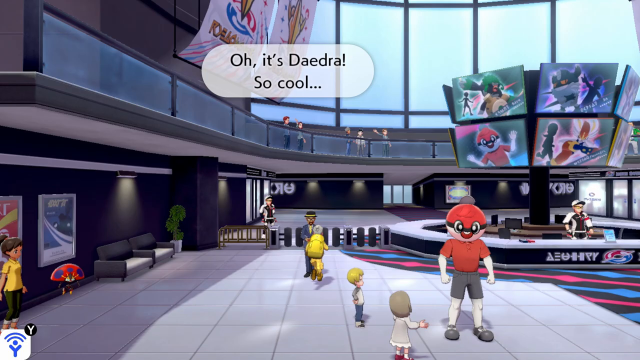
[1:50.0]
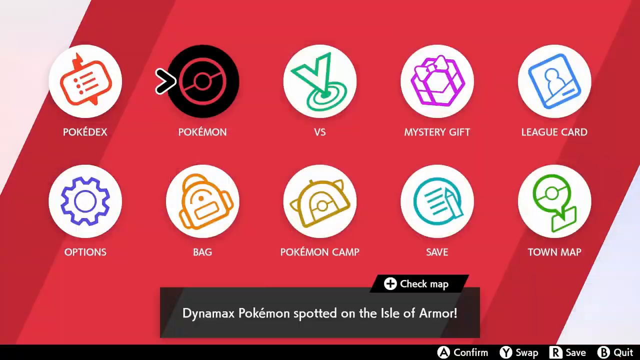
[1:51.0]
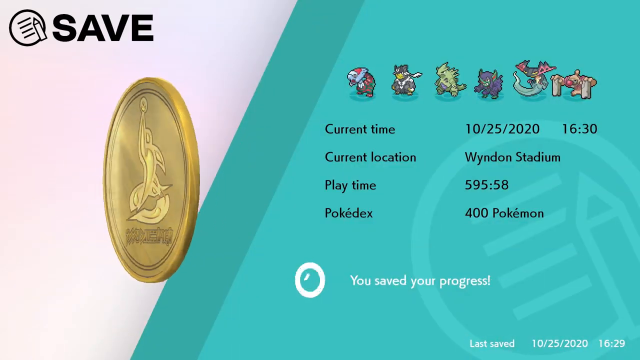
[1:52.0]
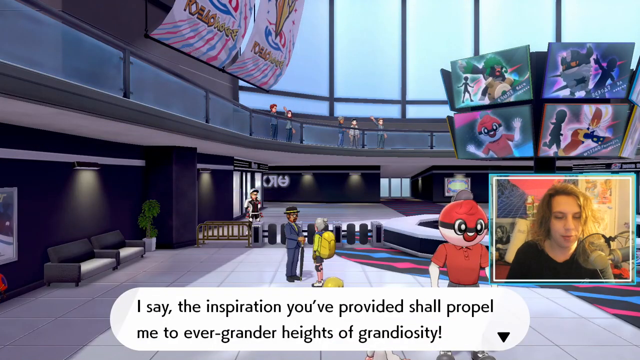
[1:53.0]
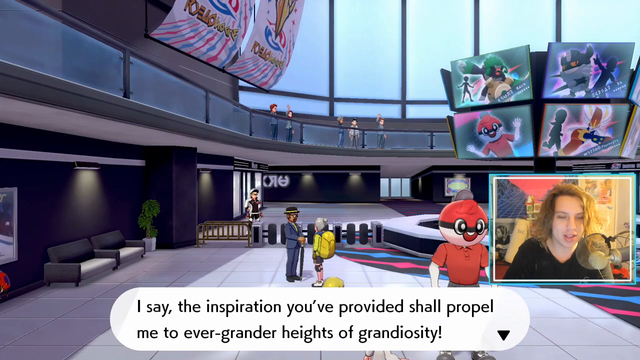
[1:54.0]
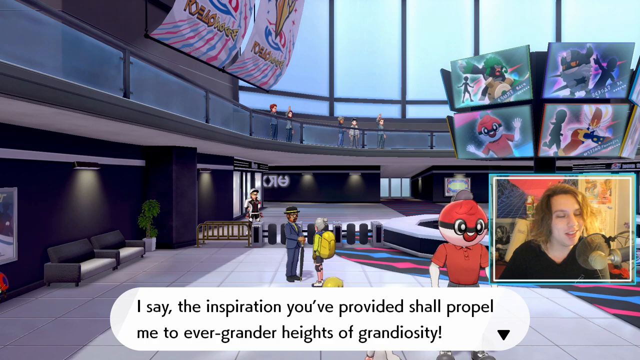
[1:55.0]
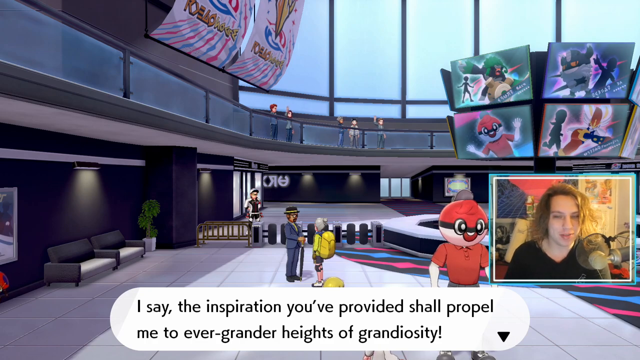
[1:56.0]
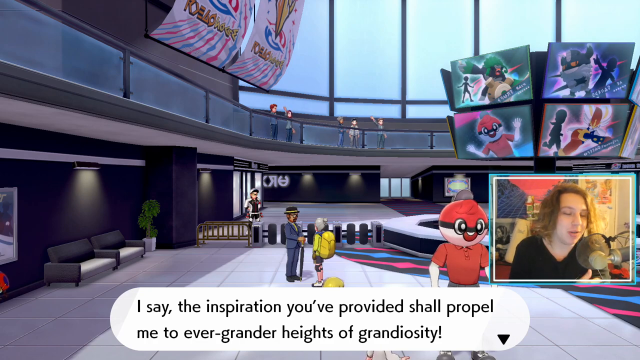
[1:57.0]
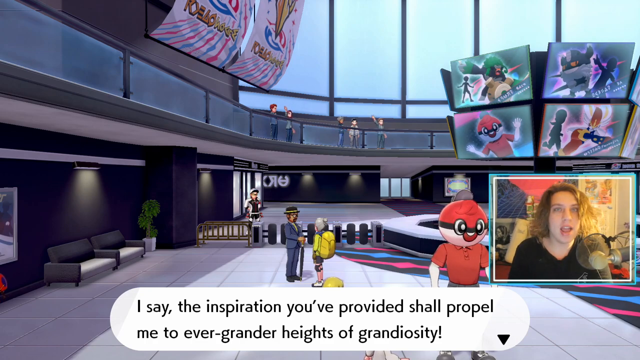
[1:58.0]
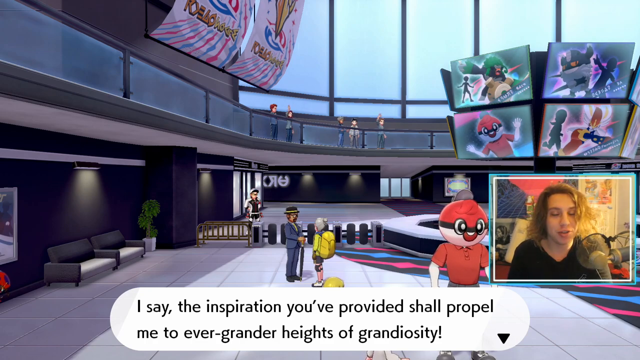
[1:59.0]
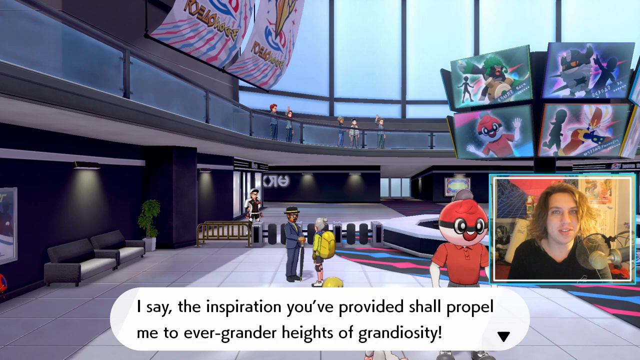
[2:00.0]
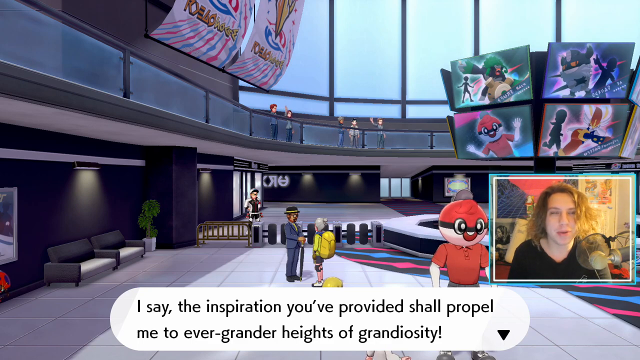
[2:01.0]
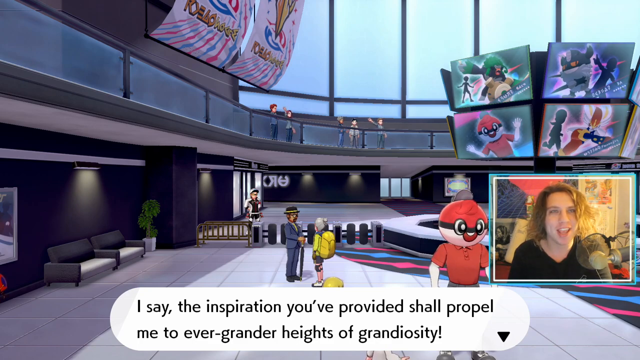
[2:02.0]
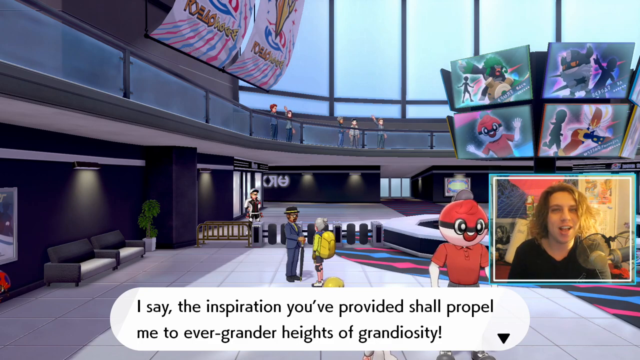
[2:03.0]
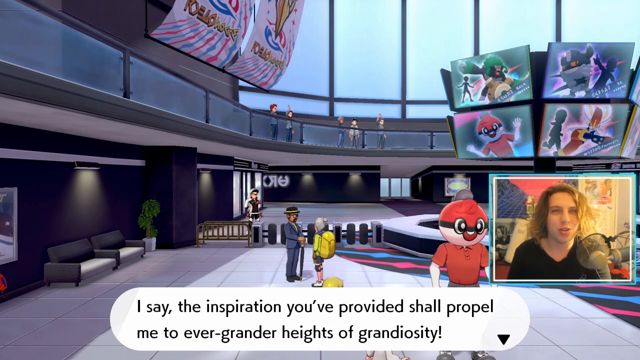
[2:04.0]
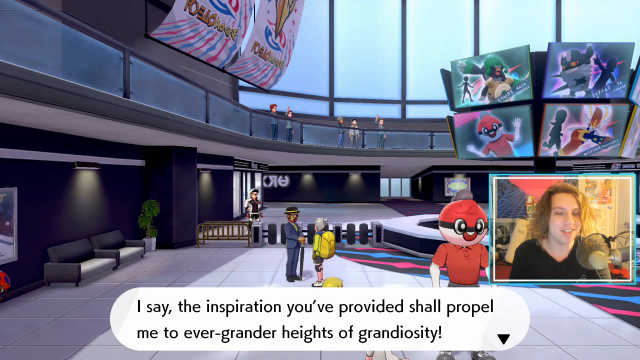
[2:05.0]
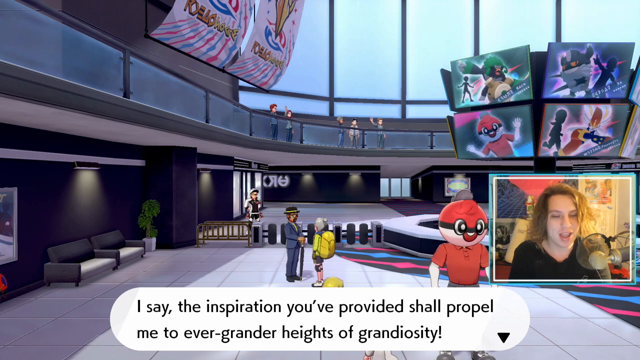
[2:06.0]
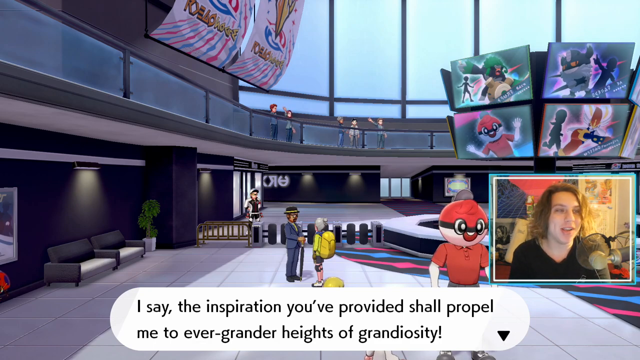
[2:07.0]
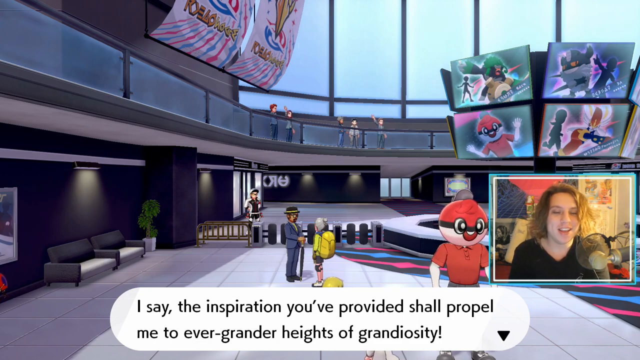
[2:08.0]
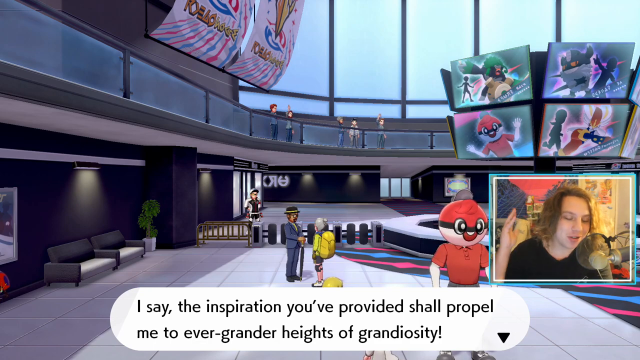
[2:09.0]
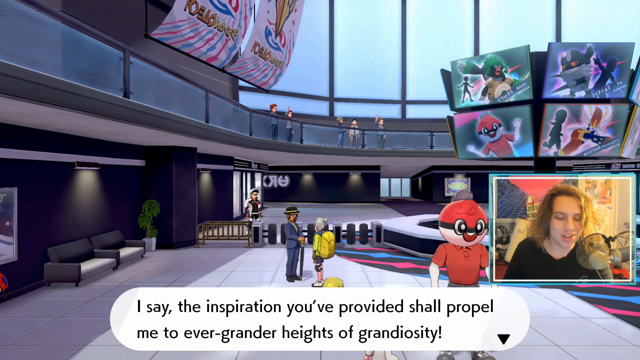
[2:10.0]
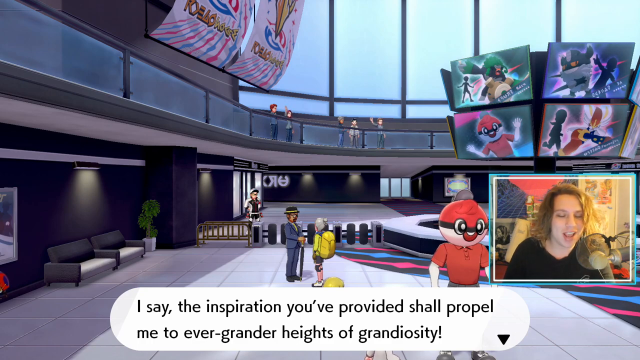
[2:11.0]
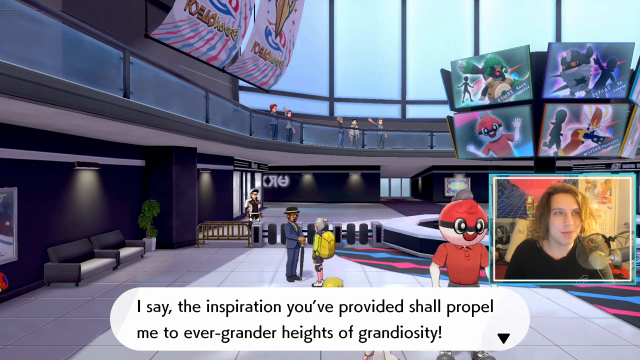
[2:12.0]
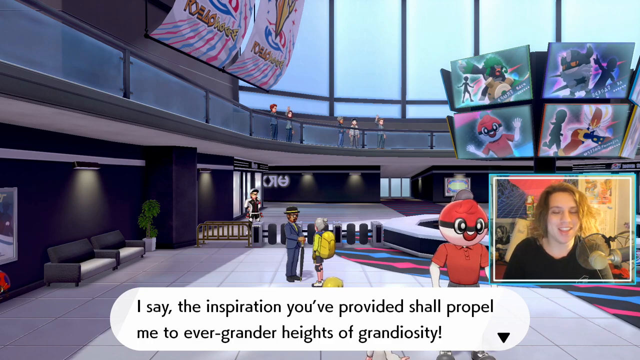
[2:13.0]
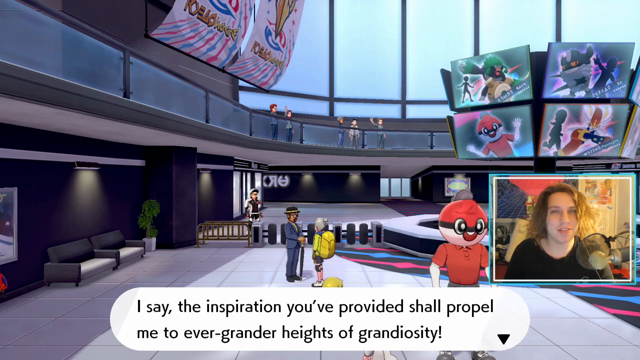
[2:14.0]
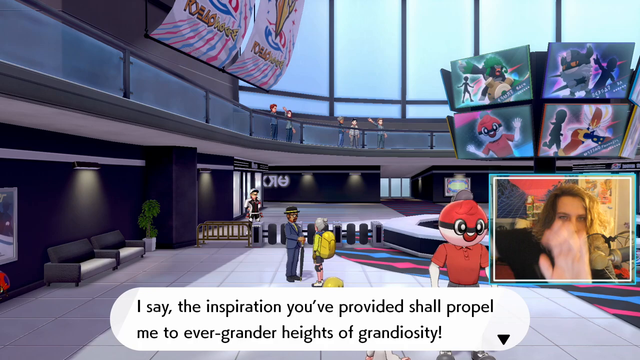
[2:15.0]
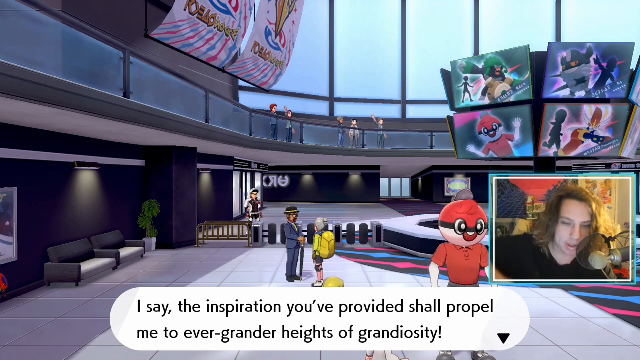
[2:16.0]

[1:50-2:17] The character is briefly in the lobby, and then a save screen appears with a gold token. To the right it reads "current time," "current location," "play time," and "Pokédex," showing this is a Pokémon-based game. The left side of the screen is white and the right side is light blue. The game is saved. The view cuts back to the lobby, with the YouTuber in the bottom right corner talking into the microphone. The character apparently was trying to get clothing from the fashion designer, the man in the suit and fedora. The two characters stand still facing each other in a long-distance view while the YouTuber continues to speak. For the rest of the video the YouTuber talks into the microphone in front of him while sitting down, then makes a hand motion, interlocking his hands in front of the camera, and the video ends.